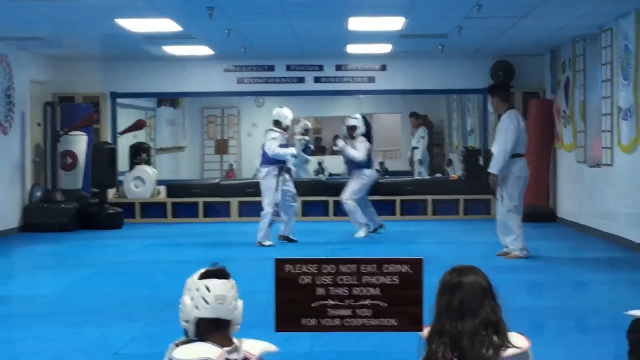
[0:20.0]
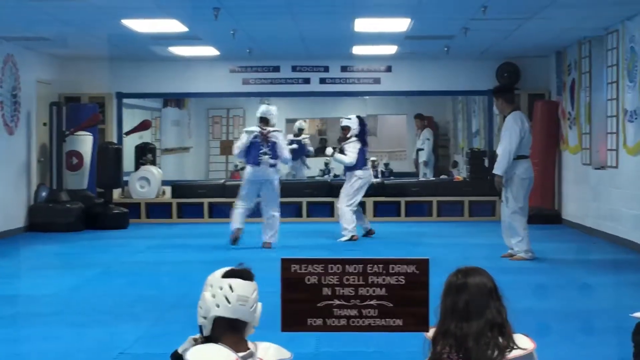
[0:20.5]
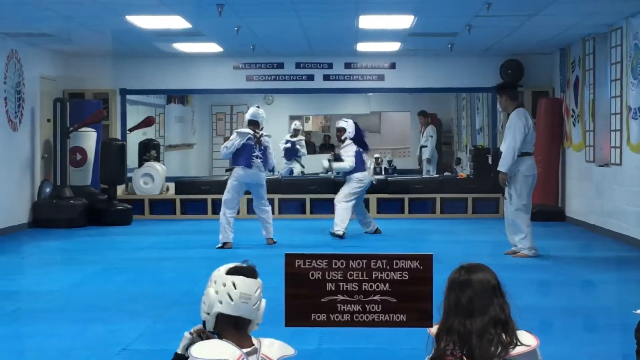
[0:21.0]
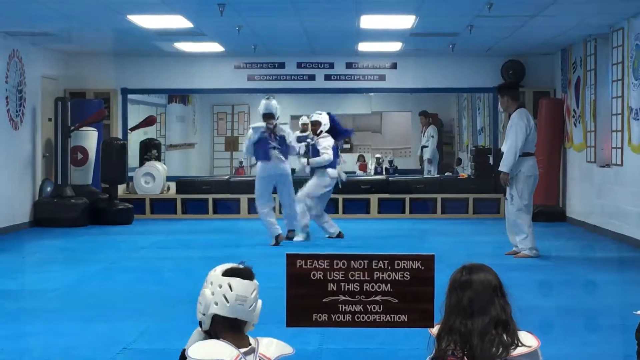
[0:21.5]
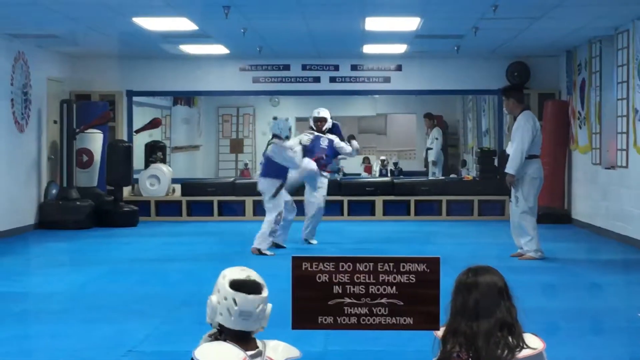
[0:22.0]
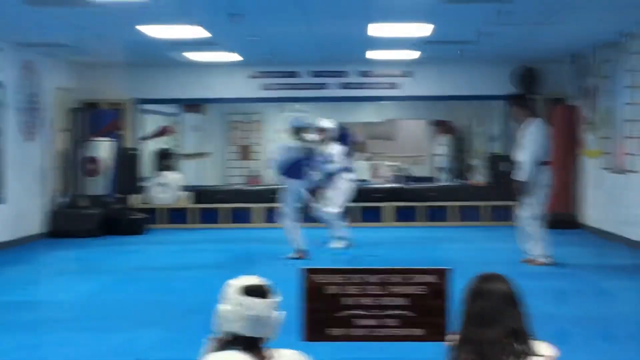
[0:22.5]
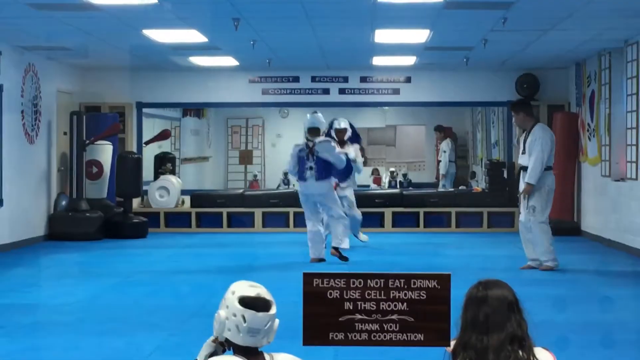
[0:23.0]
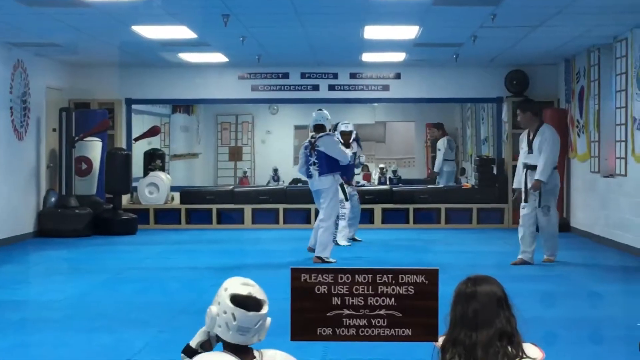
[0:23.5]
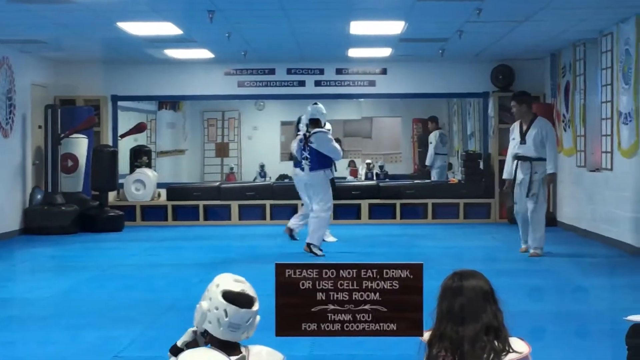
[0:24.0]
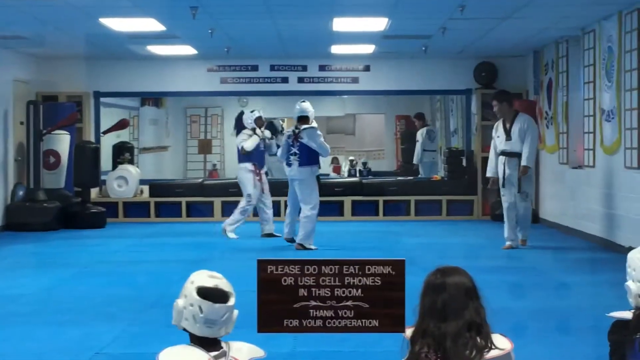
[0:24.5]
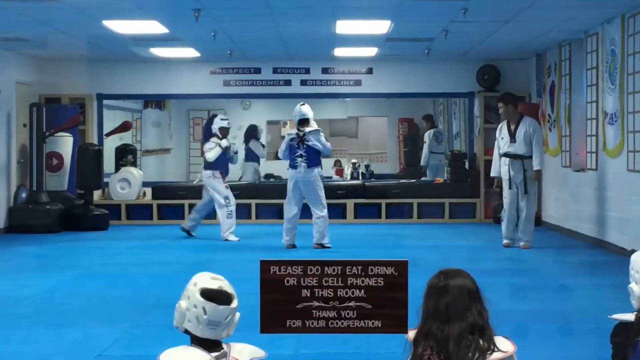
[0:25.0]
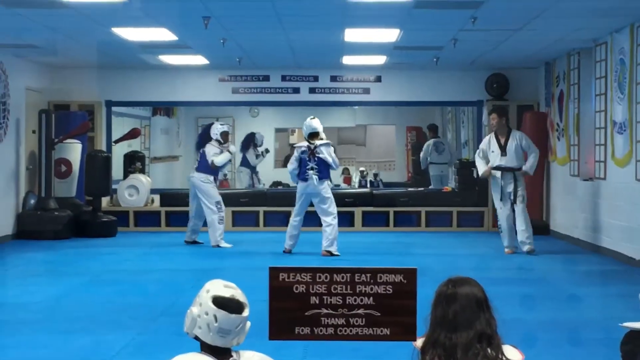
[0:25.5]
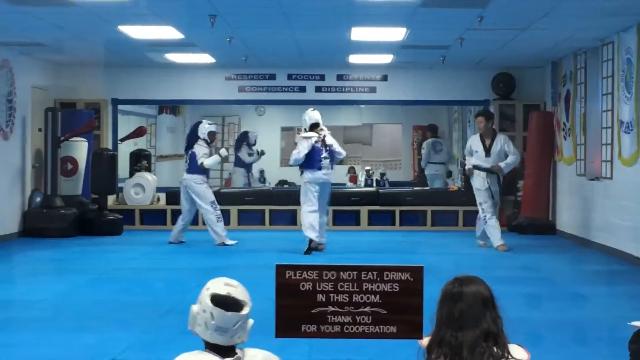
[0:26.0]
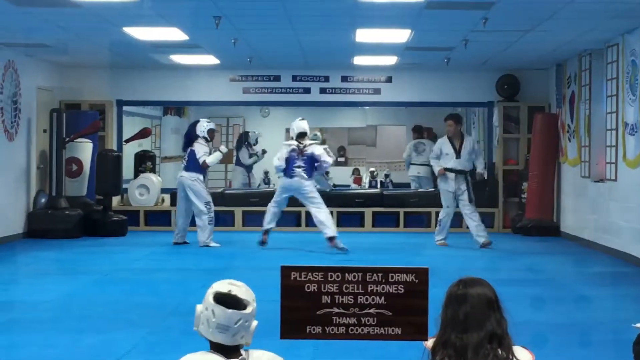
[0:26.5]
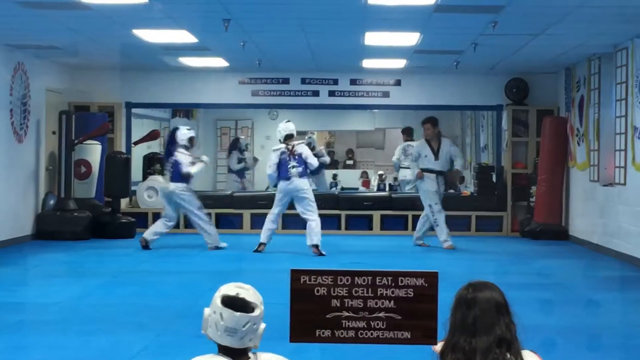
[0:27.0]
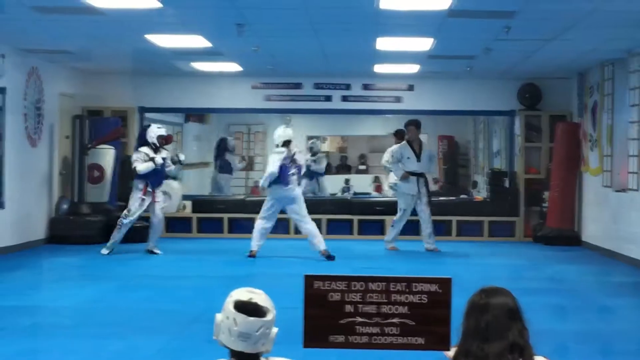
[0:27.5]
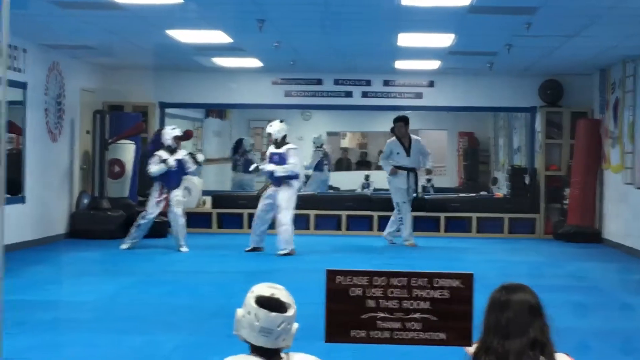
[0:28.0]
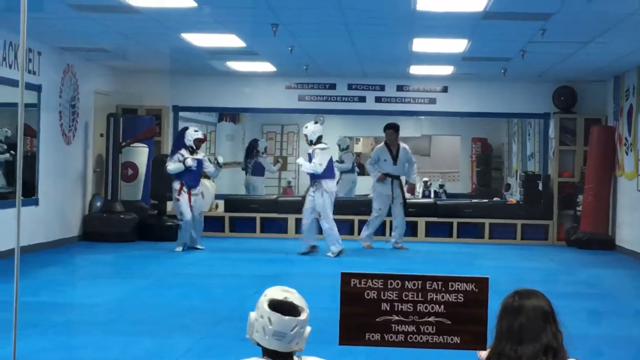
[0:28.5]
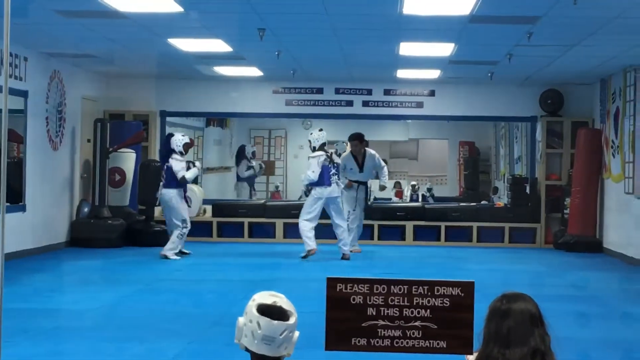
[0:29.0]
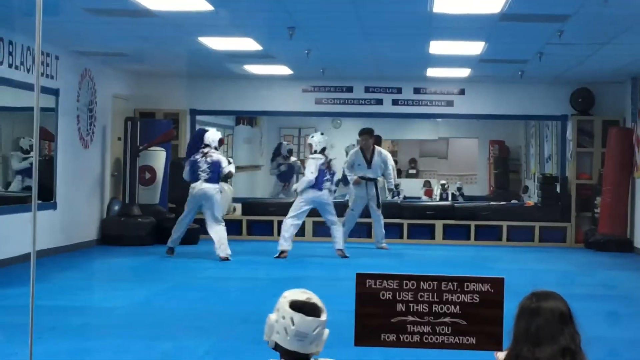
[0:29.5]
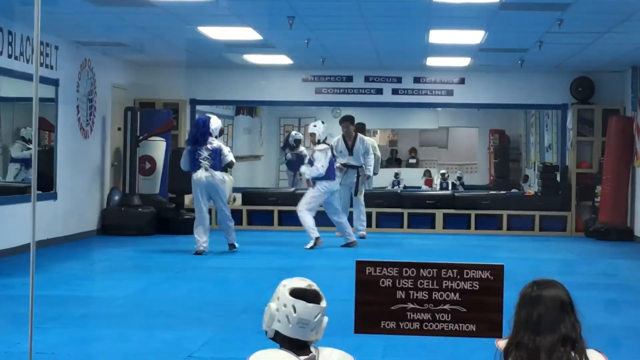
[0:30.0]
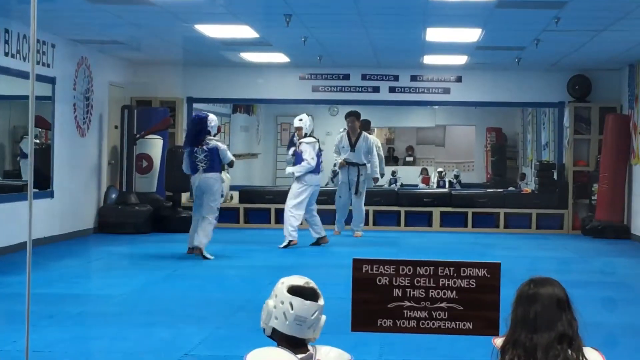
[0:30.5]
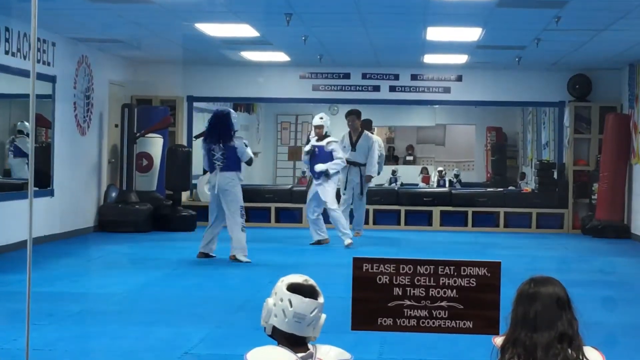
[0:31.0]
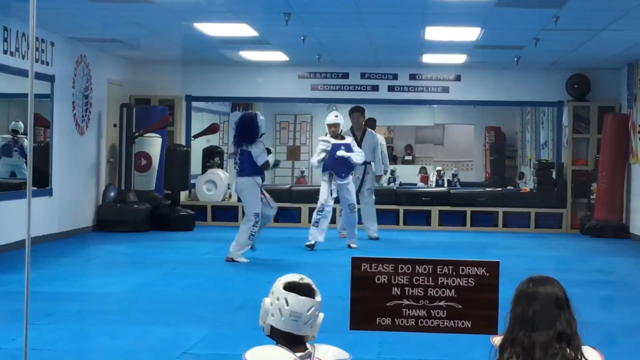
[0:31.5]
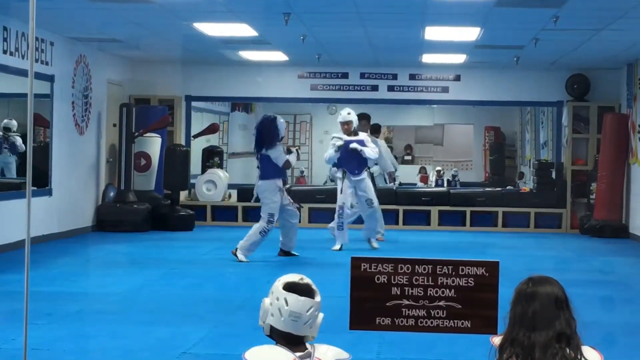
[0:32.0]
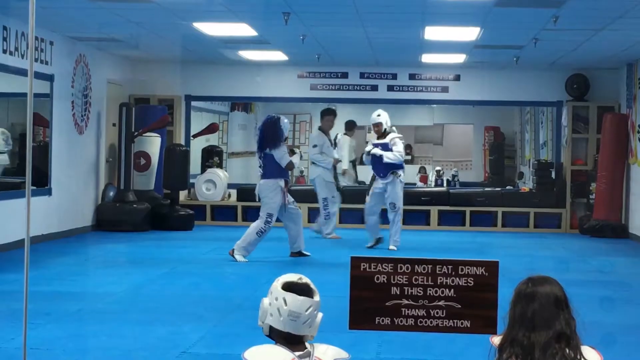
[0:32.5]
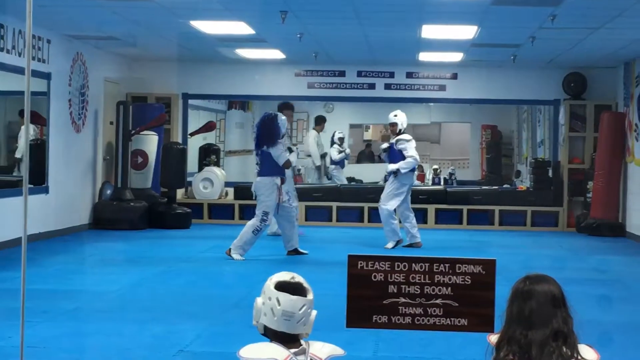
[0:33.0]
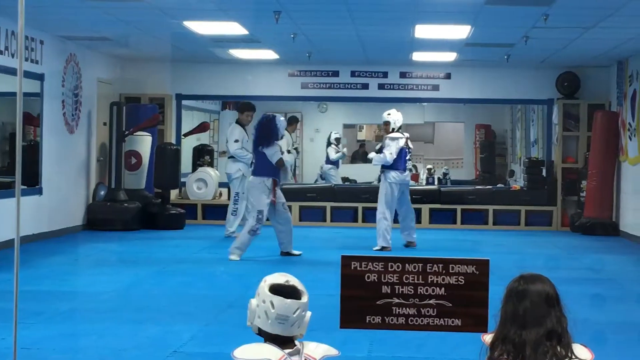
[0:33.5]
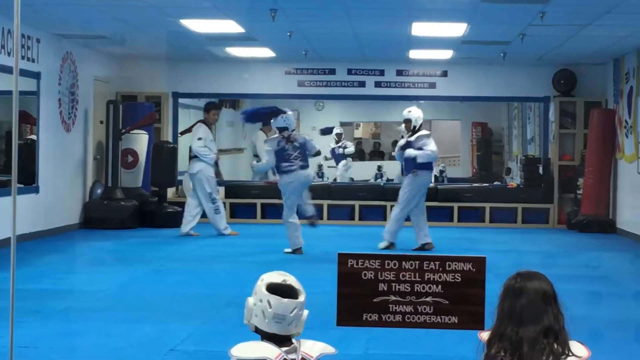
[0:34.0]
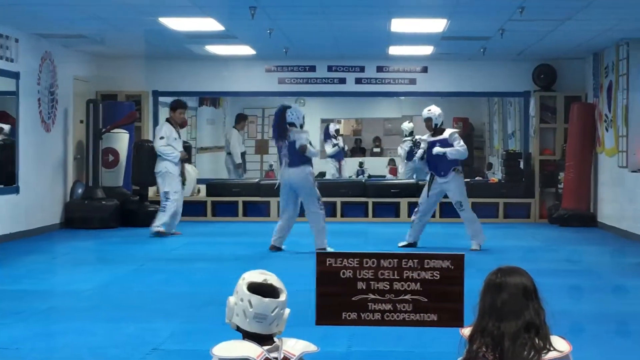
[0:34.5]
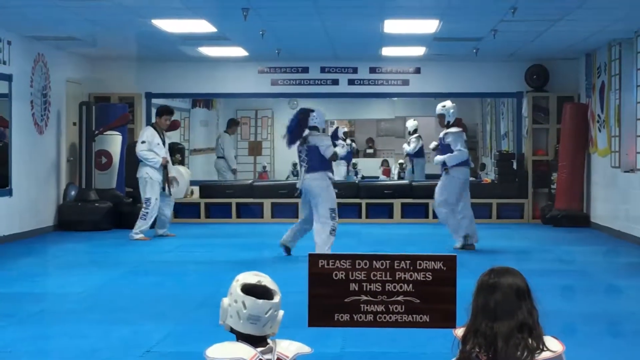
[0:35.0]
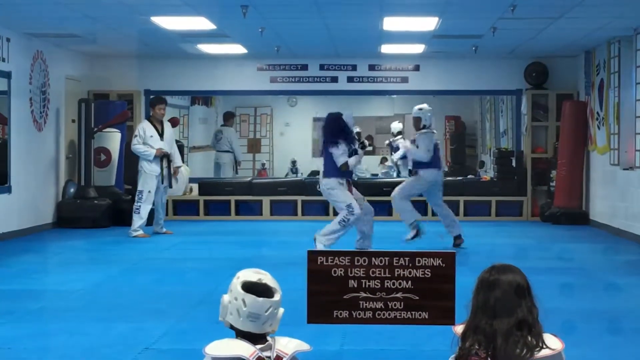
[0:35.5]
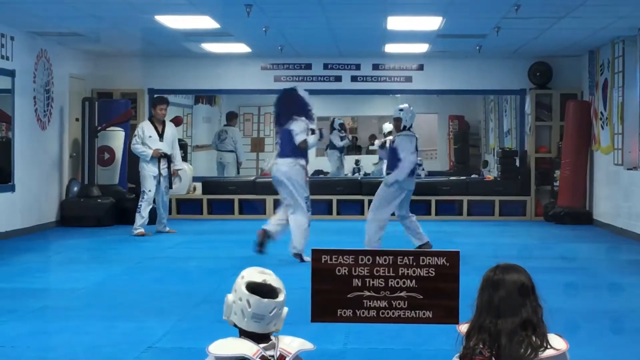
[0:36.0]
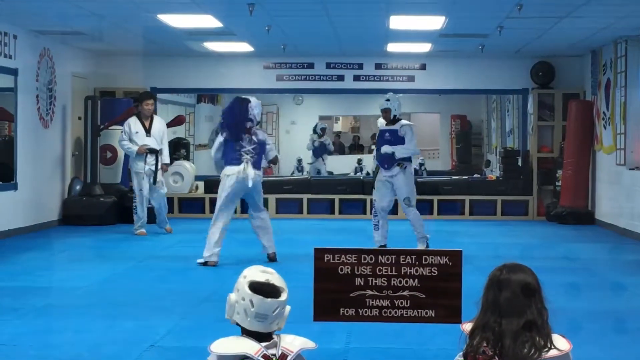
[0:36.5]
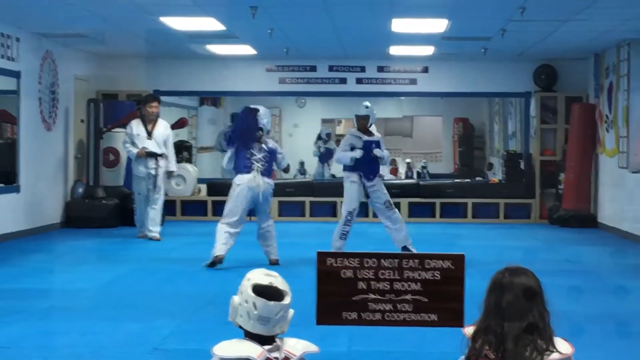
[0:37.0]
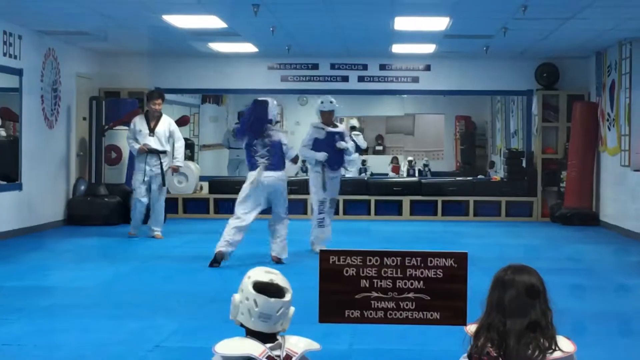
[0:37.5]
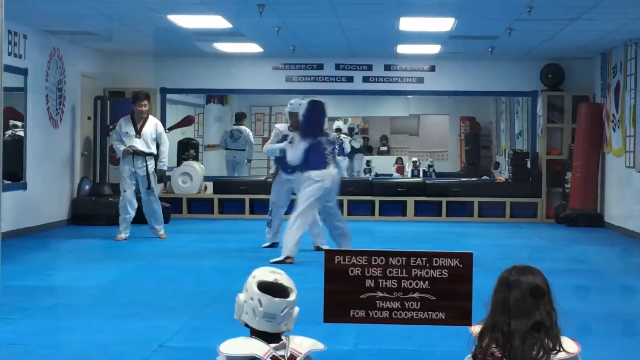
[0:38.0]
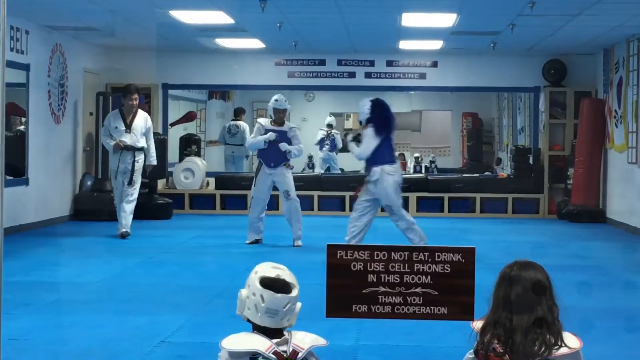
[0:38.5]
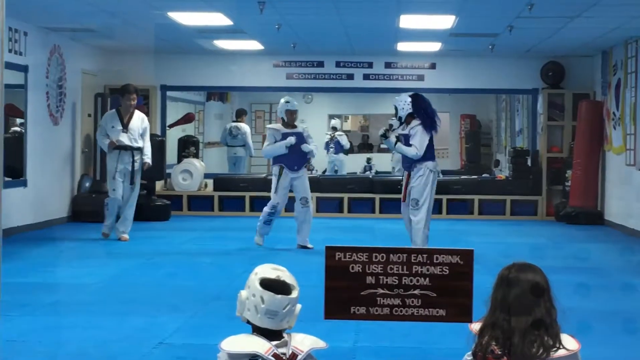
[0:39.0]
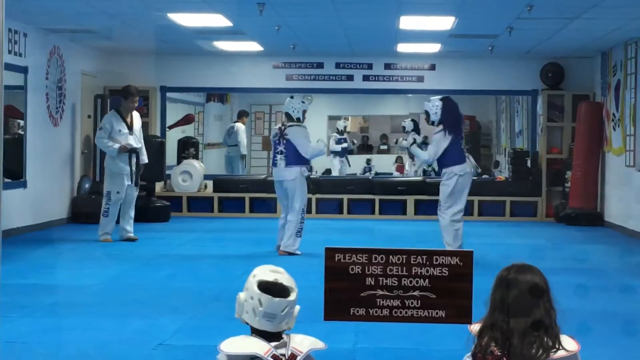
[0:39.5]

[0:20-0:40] The same area, sort of a fighting or karate area, has a large, very bright blue floor, and the roof has very bright white square lights. Three people are standing up. The one on the right is a man with a black belt. The two on the left are apparently women, wearing white outfits with white headgear and blue chest pieces. One of the women is clearly springier than the other. As the fight continues, they sort of continuously raise their legs, walking and bouncing around as they try to get hits in. In the background, the instructor moves around to give them room to fight. Behind the instructor is a large mirror reflecting the room. At the bottom middle is a large sign that says "please do not eat, drink or use cell phones in this room." The two fighters in white headgear keep fighting, though they are not really getting any hits in.